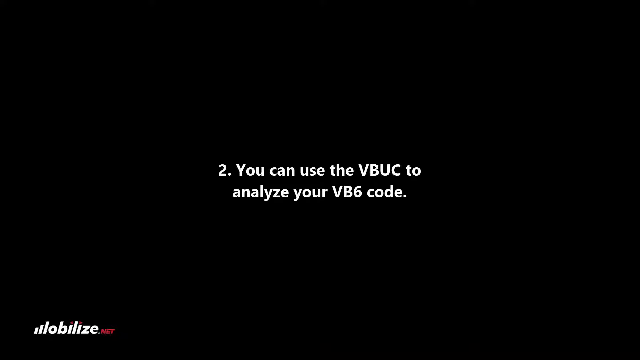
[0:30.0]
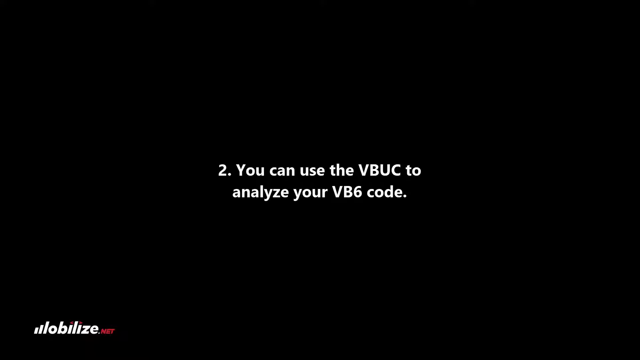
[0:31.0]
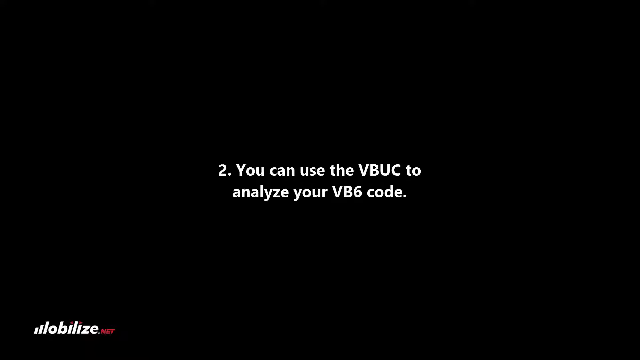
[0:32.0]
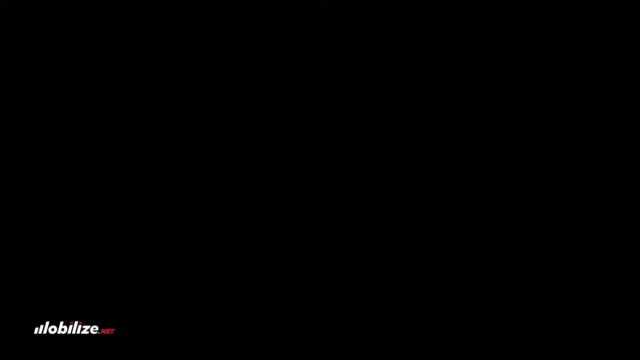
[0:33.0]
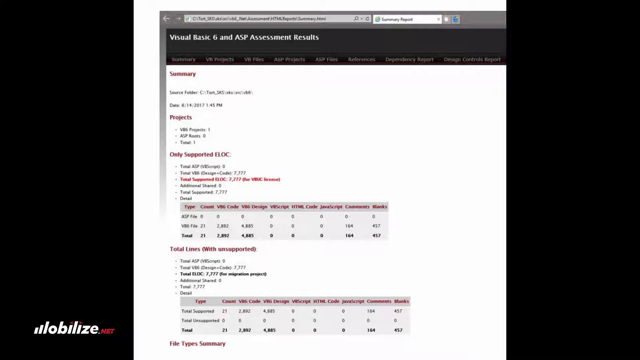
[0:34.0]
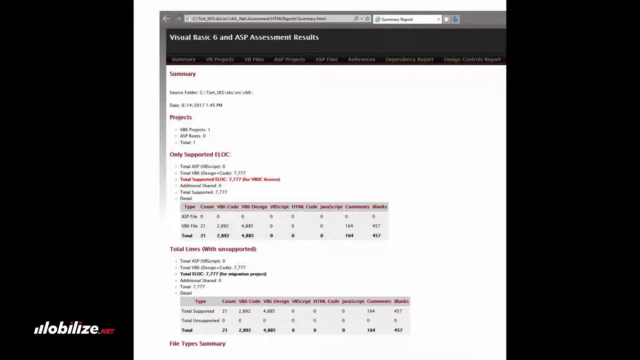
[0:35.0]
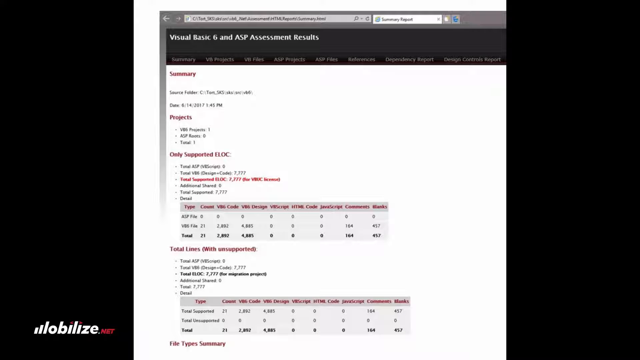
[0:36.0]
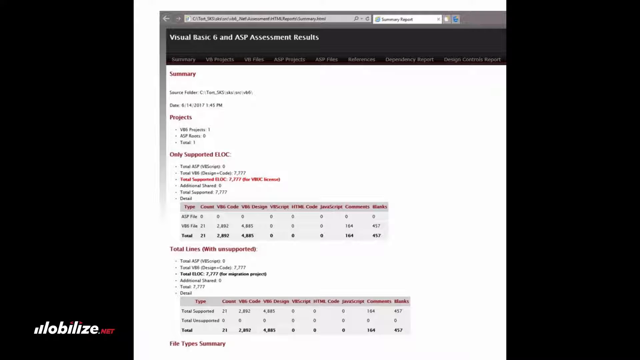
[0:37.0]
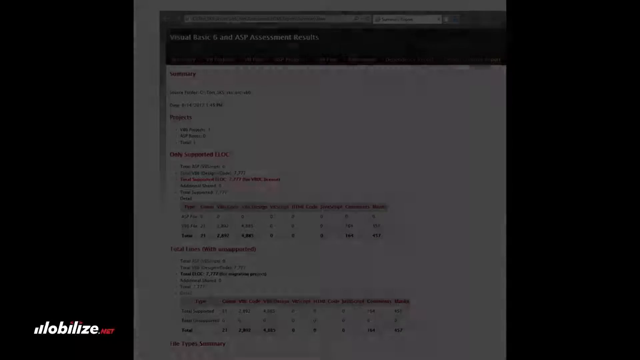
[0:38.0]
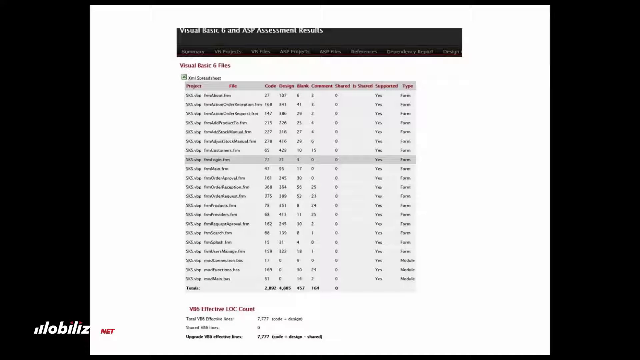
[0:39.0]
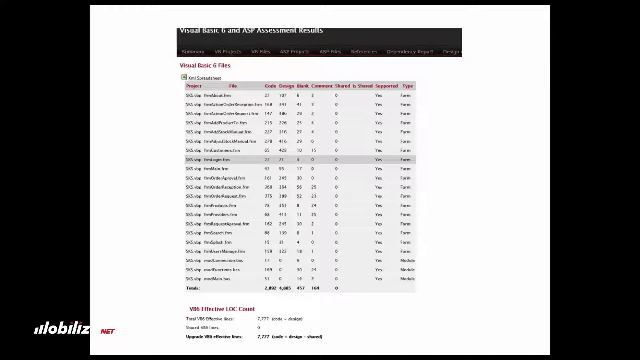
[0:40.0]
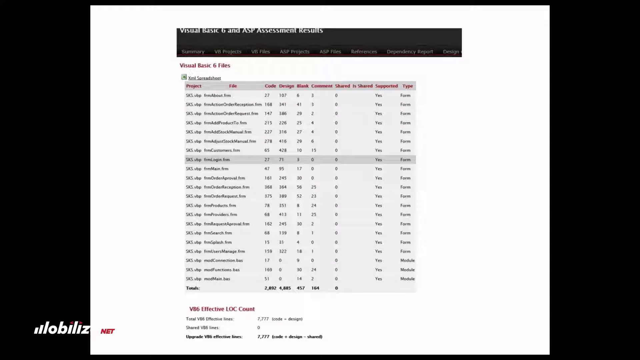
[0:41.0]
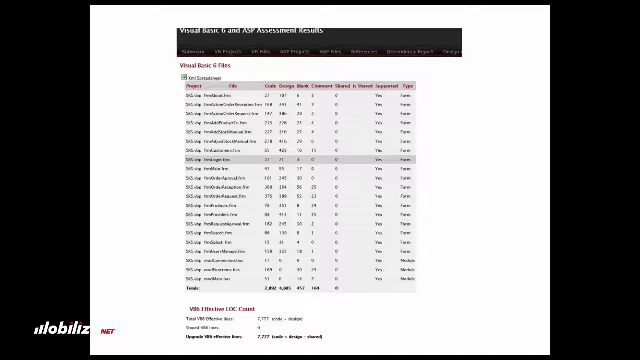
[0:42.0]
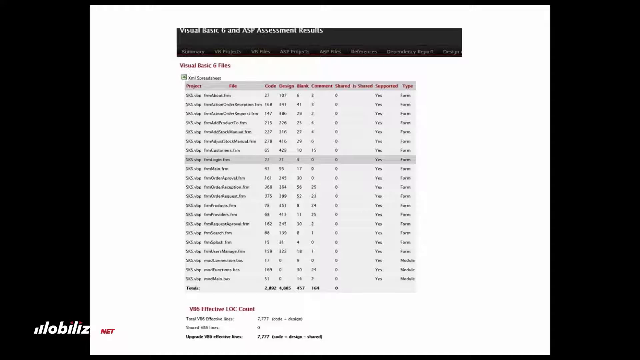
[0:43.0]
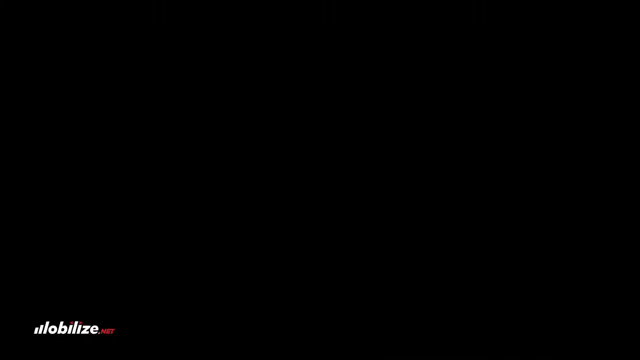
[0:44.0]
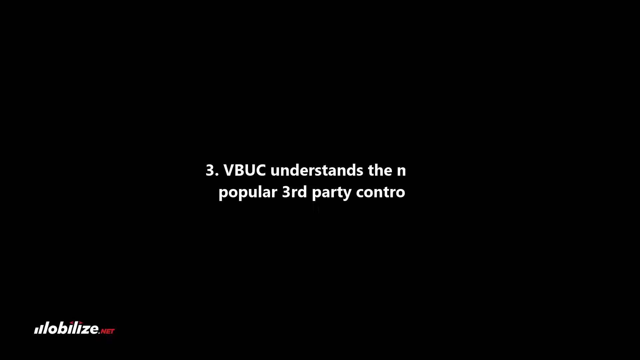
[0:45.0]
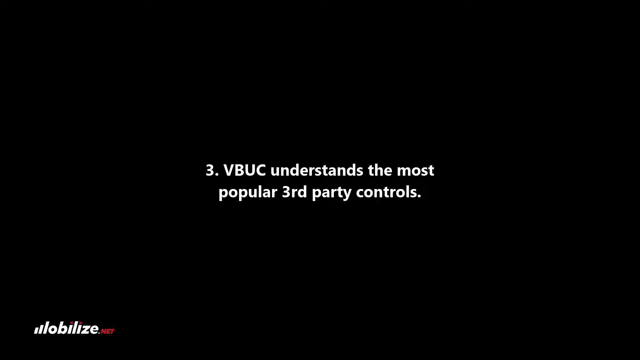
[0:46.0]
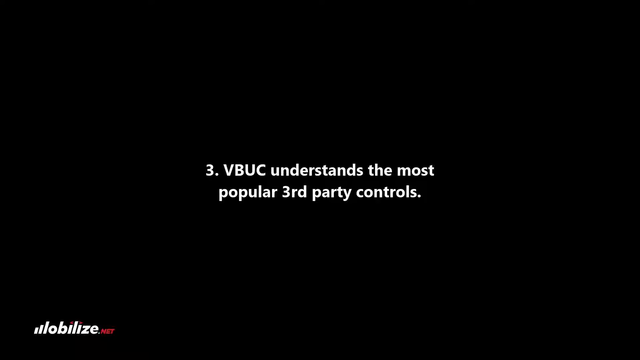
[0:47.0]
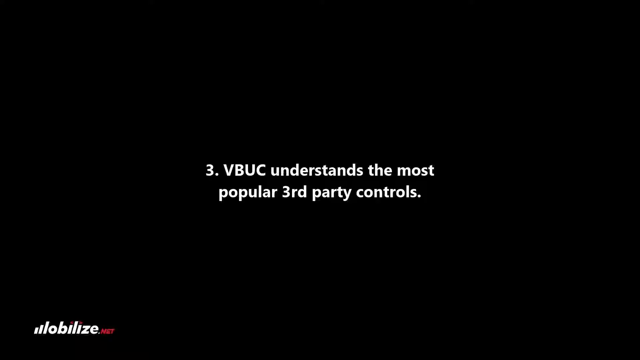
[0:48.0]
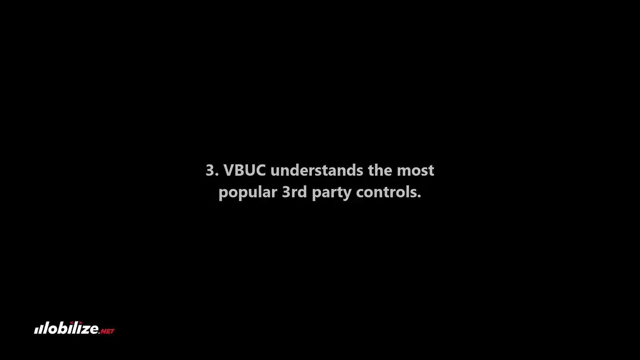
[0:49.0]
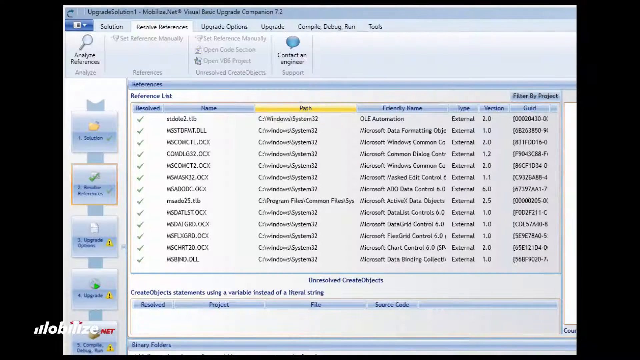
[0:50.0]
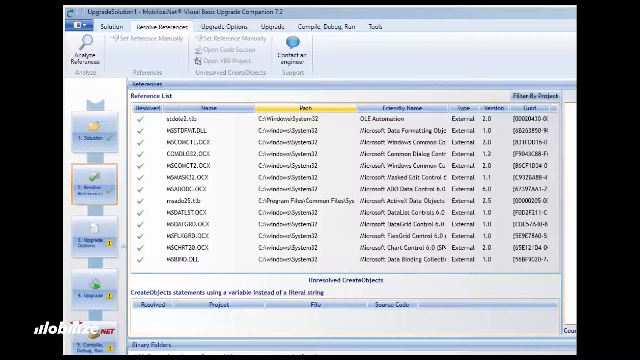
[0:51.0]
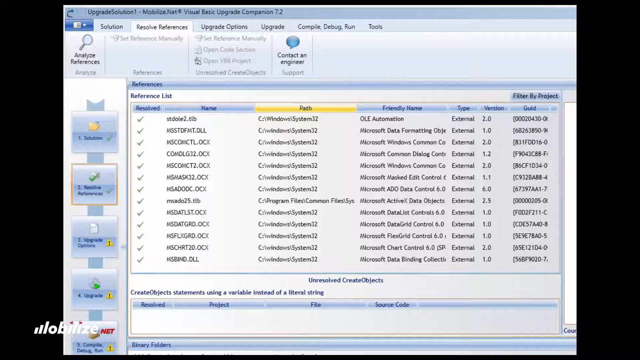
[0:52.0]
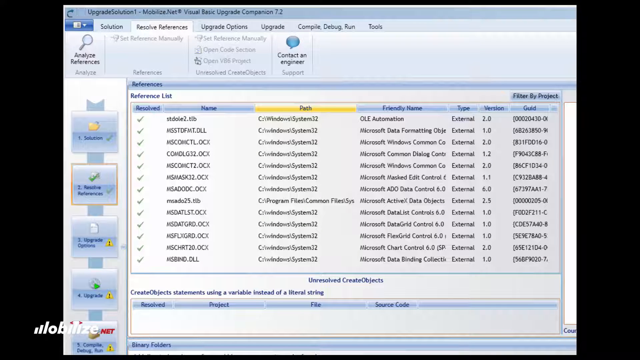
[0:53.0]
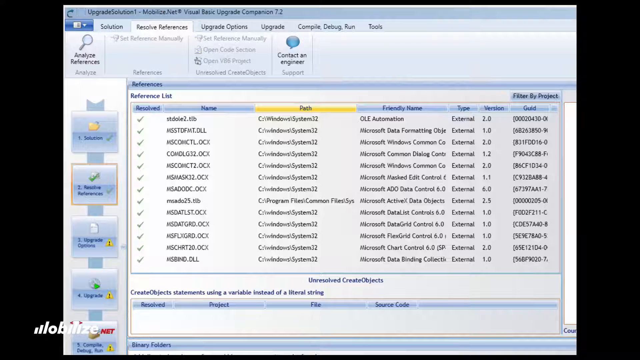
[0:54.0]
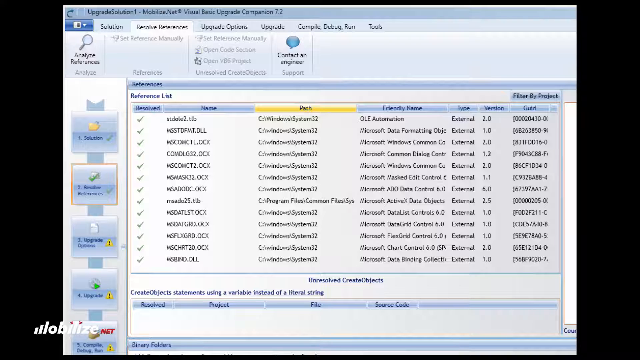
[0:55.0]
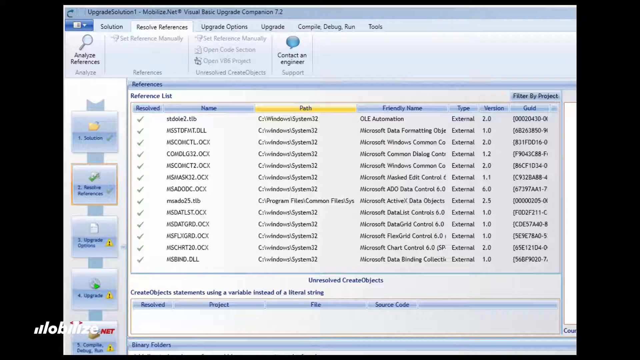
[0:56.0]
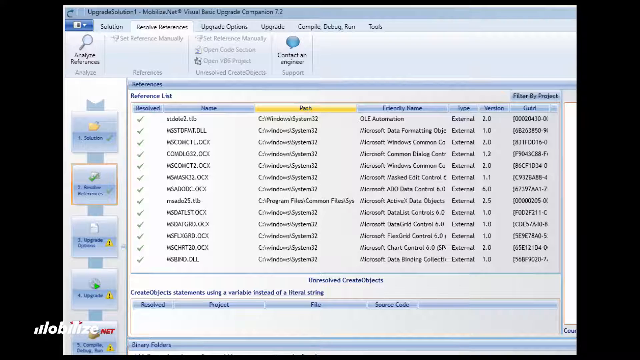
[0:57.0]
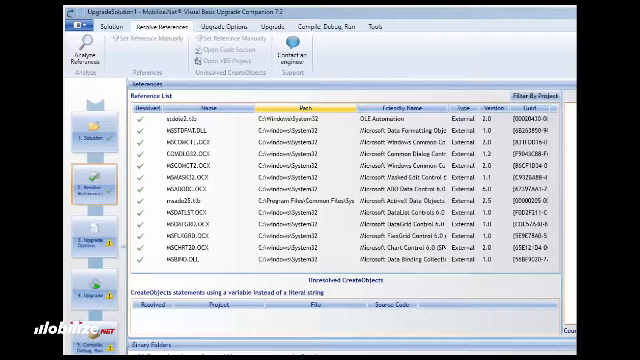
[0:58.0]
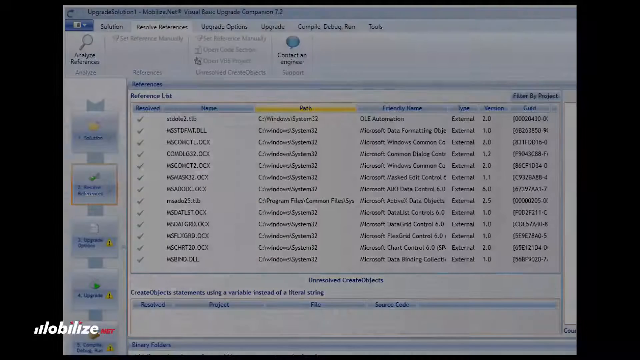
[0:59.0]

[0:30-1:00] The number 2 bullet point swipes out and disappears, bringing up an image of what seems to be another webpage, titled "Visual Basics 6 and ASP Assessment Results," followed by the results of the assessment in multiple tables and bullet points. This image fades out and another table of information appears, also labeled "Visual Basics 6 and ASP Assessment Results" at the top, with a subtitle reading "Visual Basics 6 Files." The image disappears, returning to the solid black screen, where text appears: "number three VBUC understands the most popular third-party controls." The text fades out and another image fades in, seemingly a set of files: a list of files selected under "Resolve References," followed by a reference list of different files. The image holds for a few seconds before fading back to the black screen, where bullet point number 4 appears.